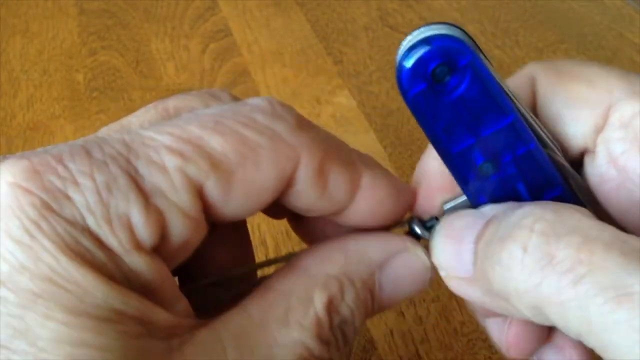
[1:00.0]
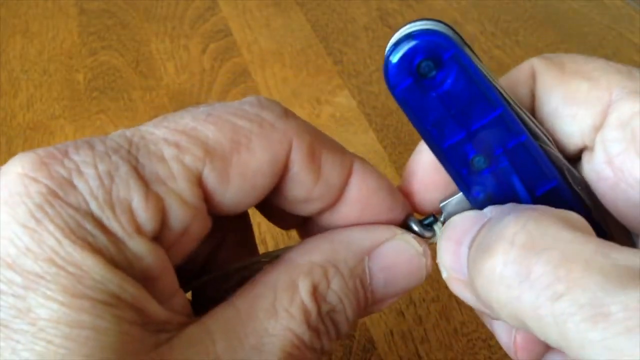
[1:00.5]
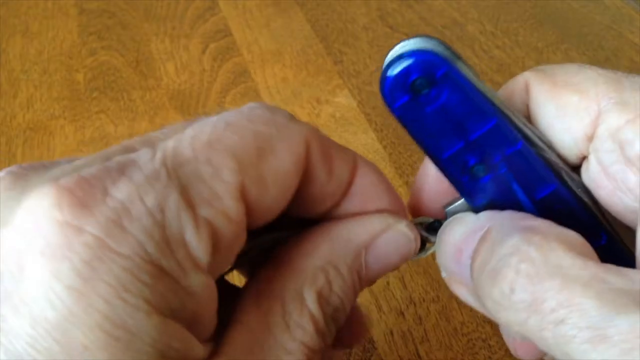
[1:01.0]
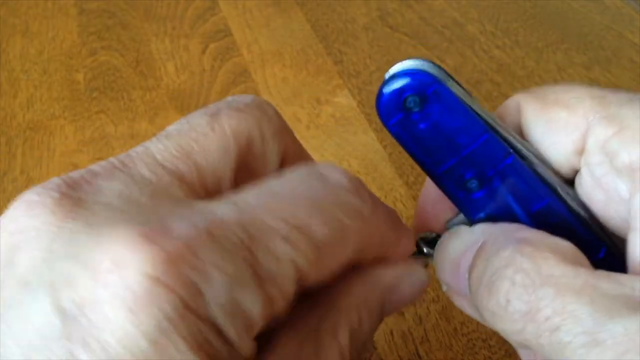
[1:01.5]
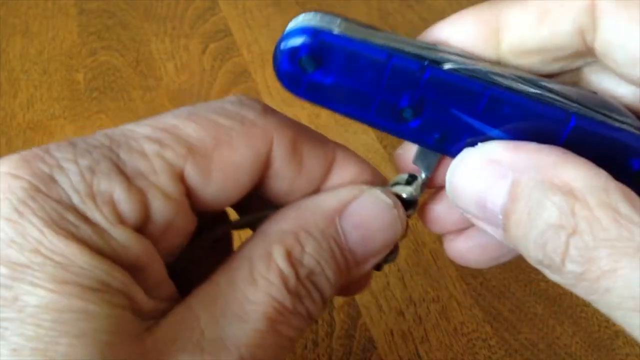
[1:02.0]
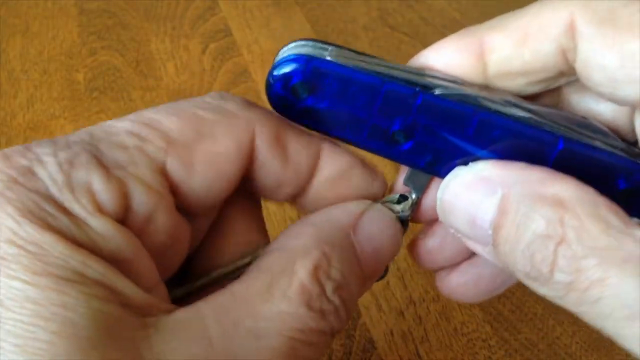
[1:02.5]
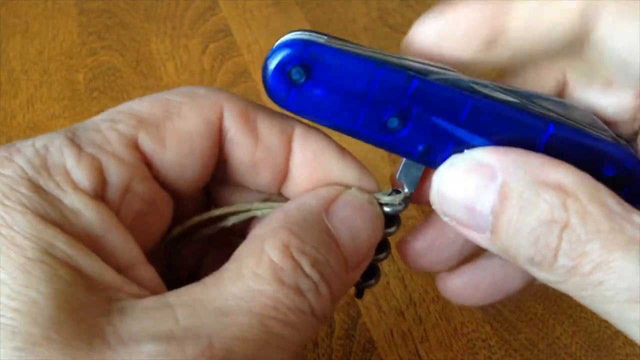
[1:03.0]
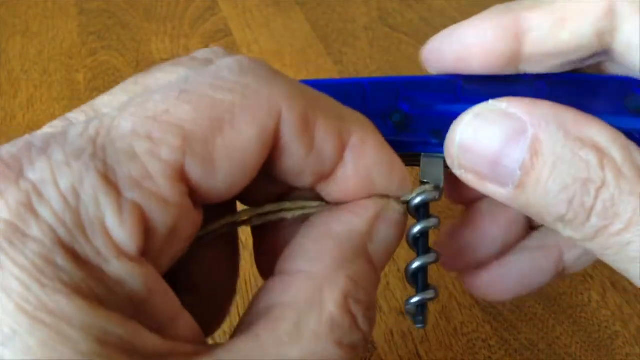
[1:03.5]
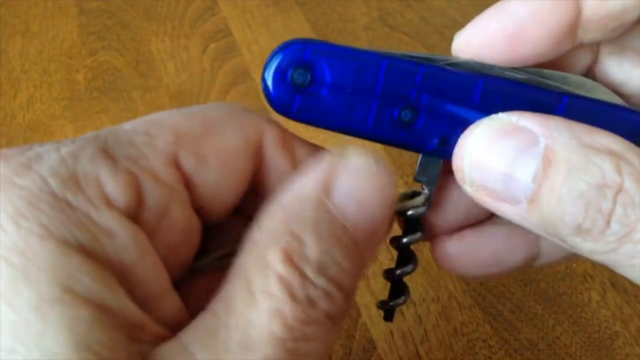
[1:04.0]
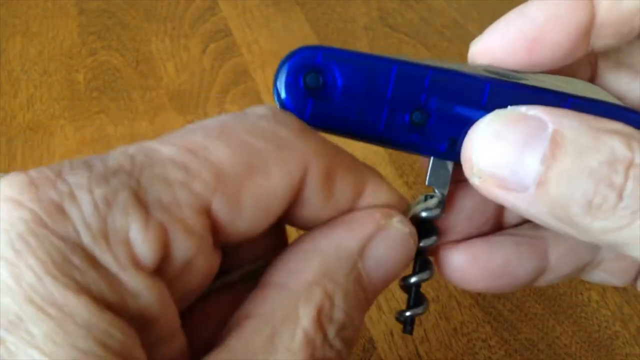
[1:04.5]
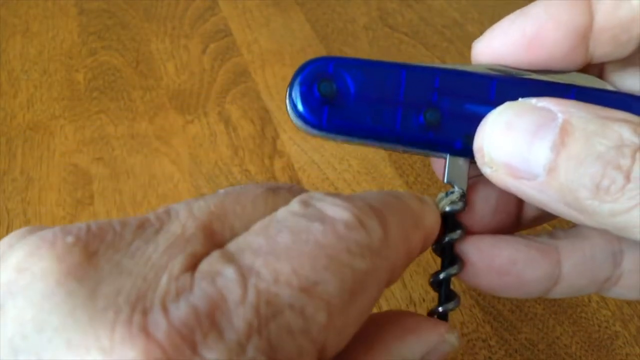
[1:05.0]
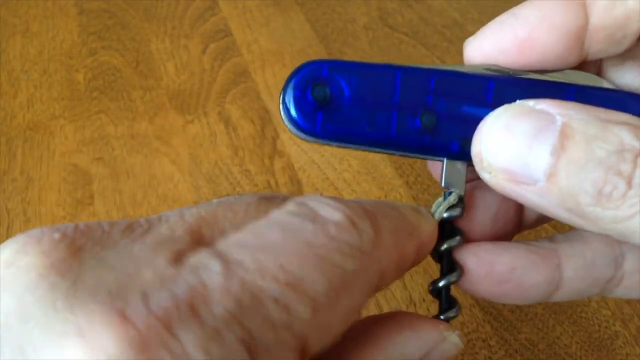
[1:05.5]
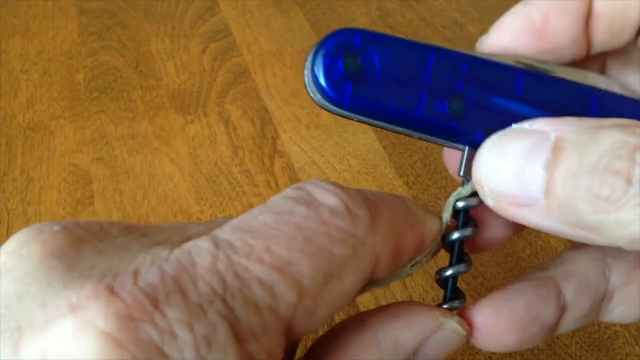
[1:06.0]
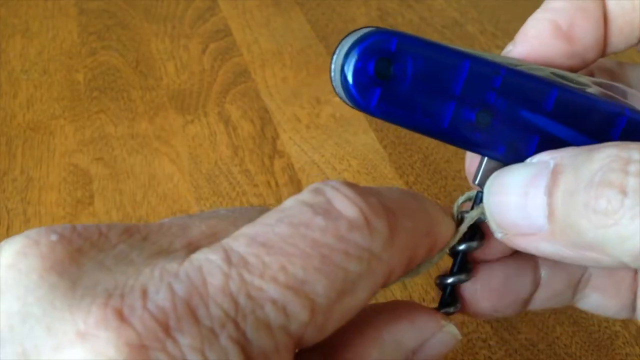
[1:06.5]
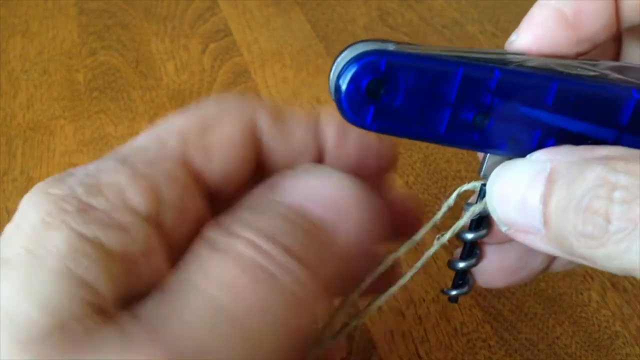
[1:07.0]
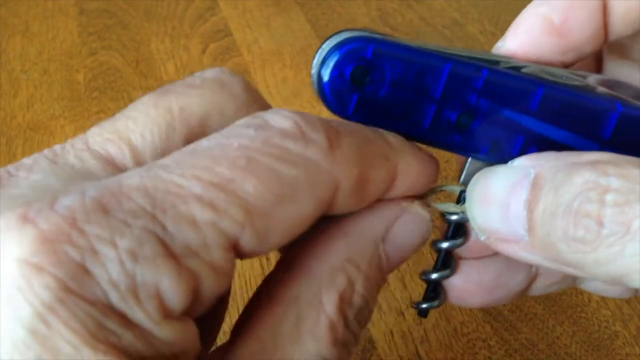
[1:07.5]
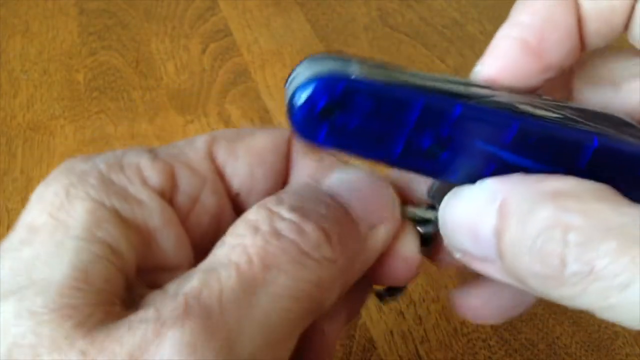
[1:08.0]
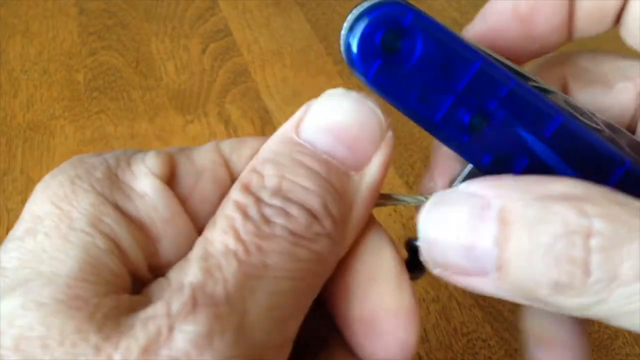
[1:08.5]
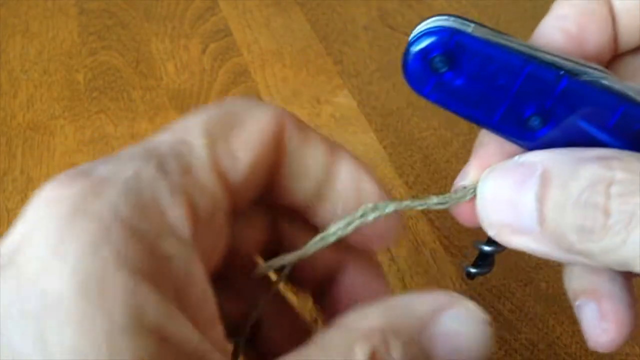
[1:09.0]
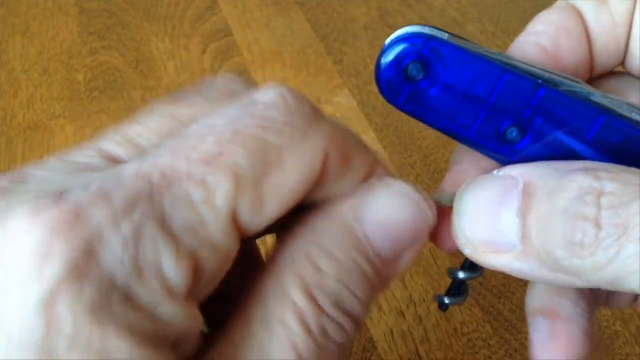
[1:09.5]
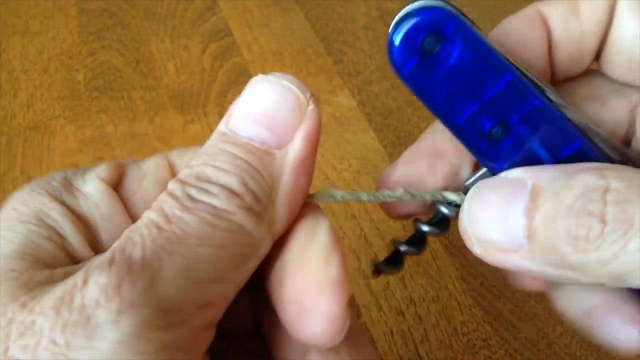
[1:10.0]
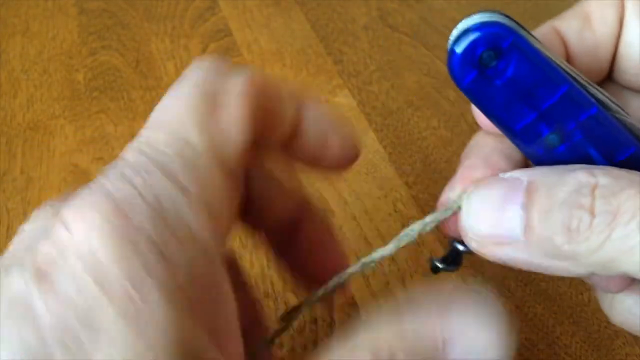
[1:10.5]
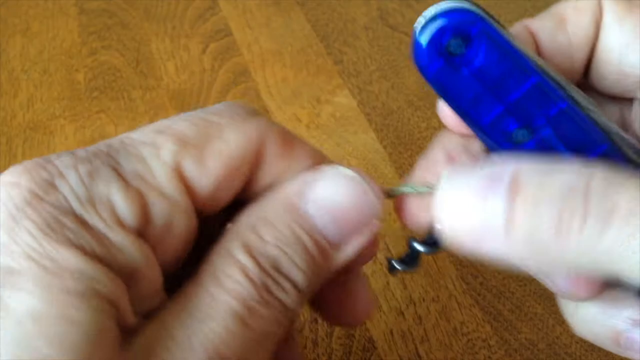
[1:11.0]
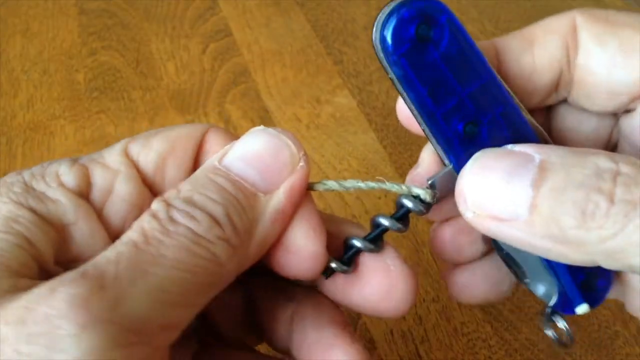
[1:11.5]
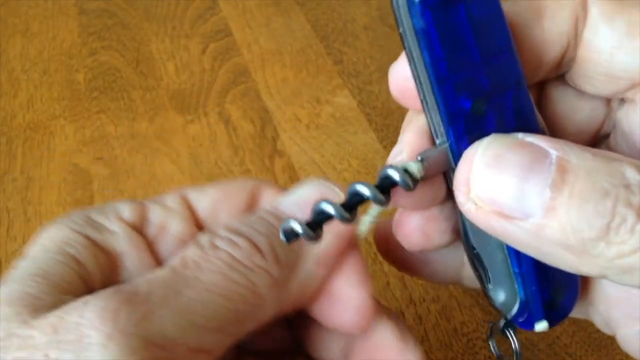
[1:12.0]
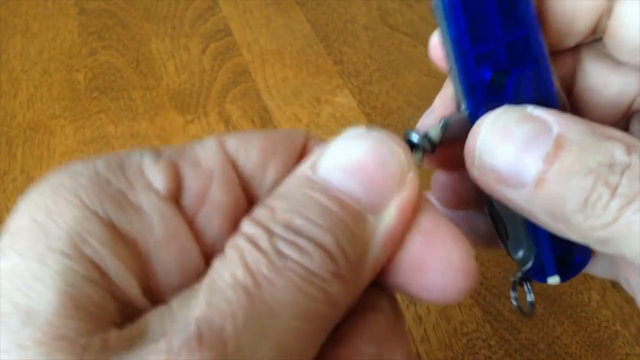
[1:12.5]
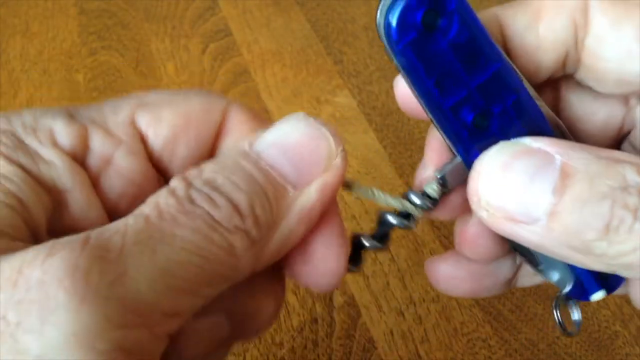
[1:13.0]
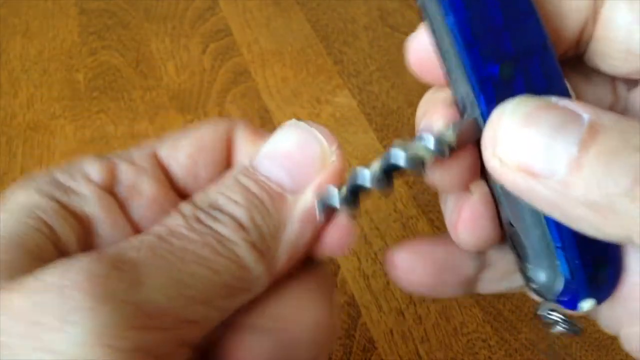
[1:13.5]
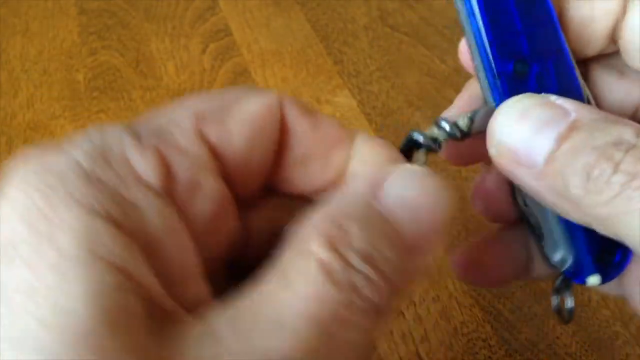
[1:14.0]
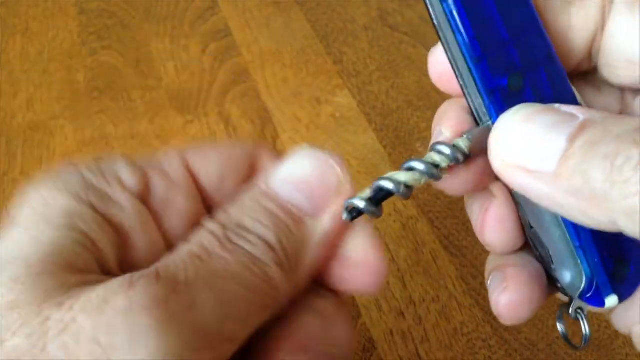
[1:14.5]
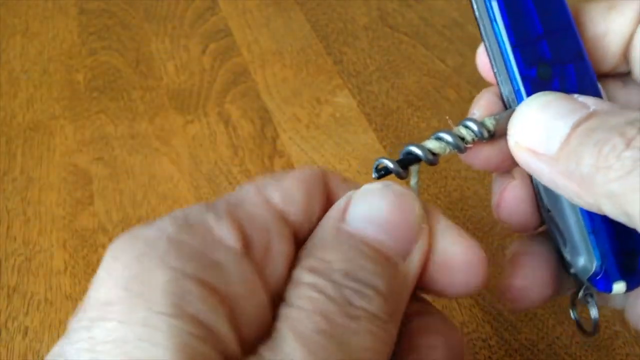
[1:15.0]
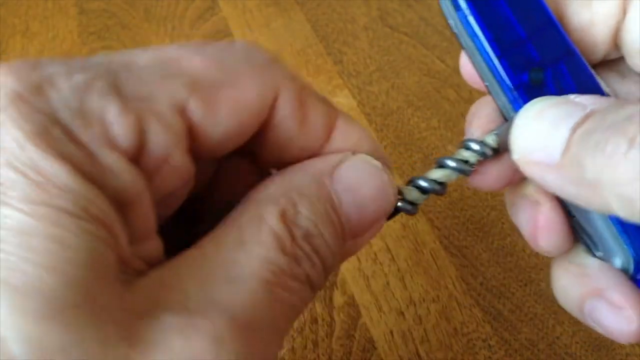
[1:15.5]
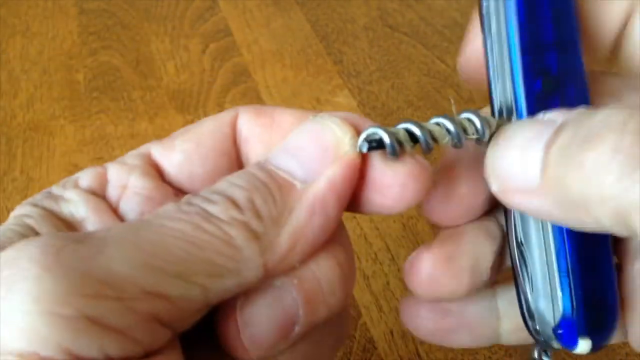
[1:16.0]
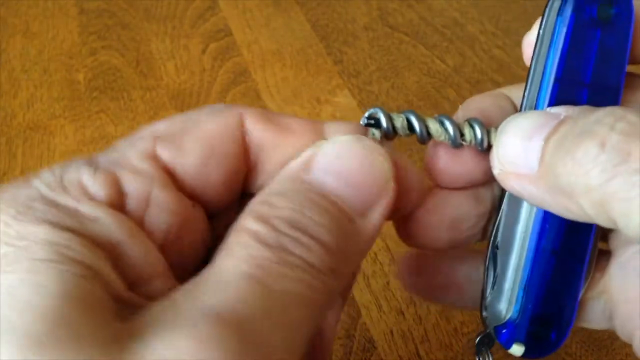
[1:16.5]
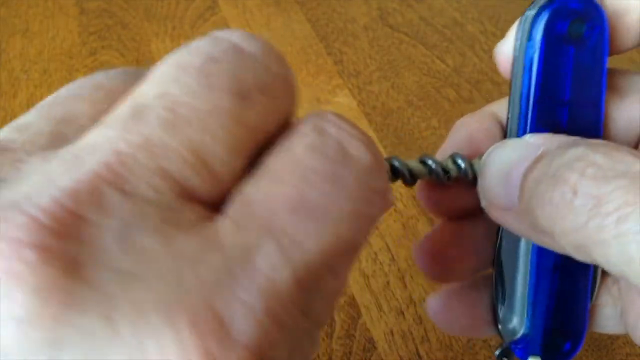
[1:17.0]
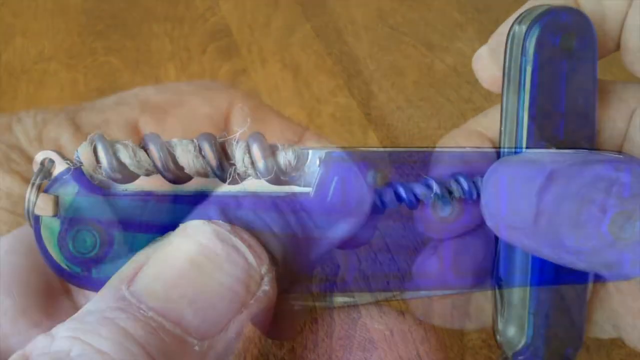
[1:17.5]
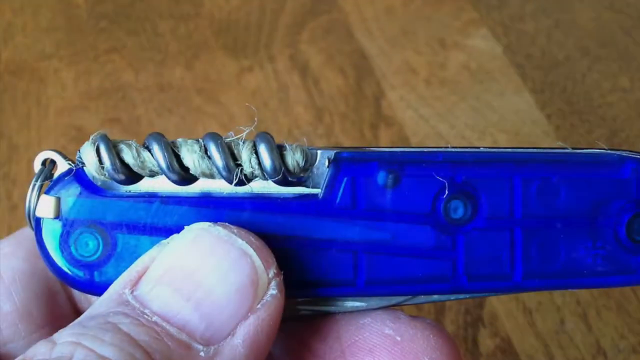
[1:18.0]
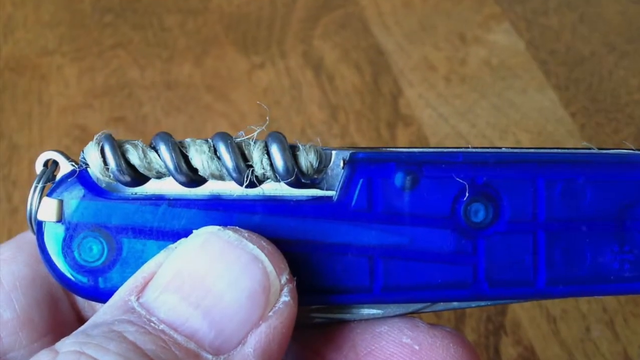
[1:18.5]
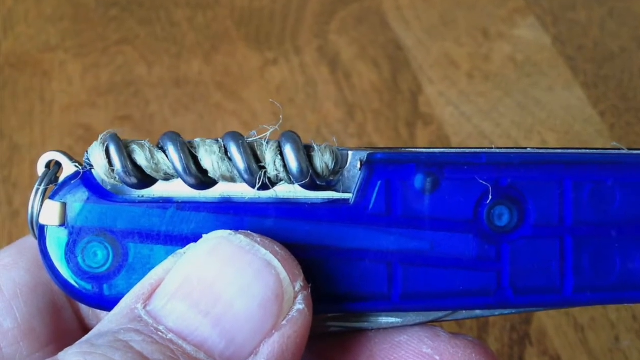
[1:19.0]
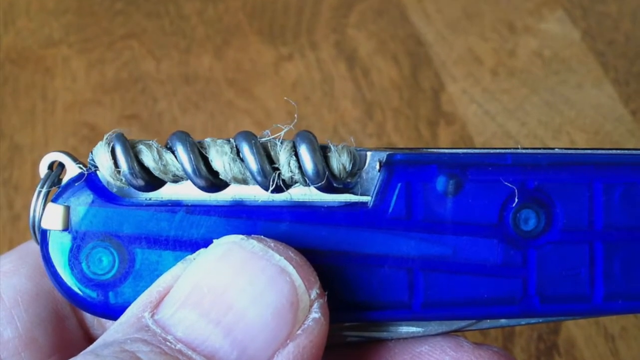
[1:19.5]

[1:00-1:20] The older man wraps the yarn, apparently with some glue, very tightly around every piece of the SAK corkscrew. At the end of the wrapping, he shows the final result in a zoomed-in view, in which his nails look bad.